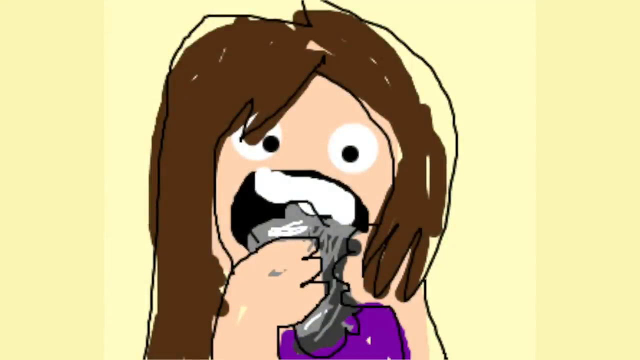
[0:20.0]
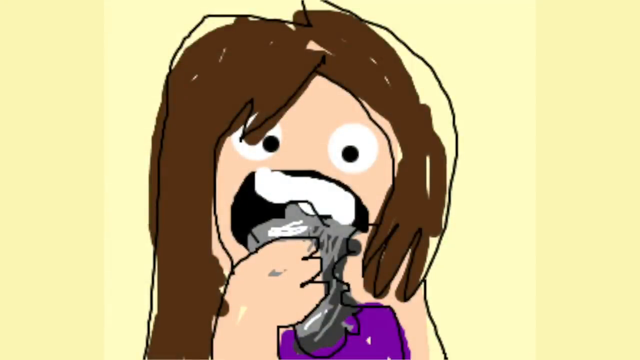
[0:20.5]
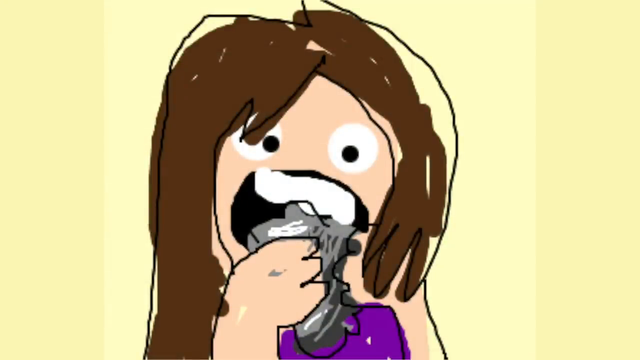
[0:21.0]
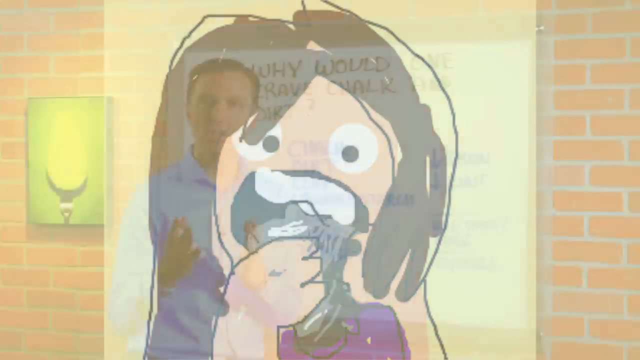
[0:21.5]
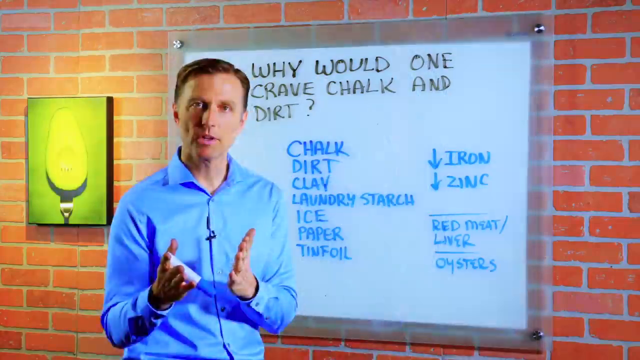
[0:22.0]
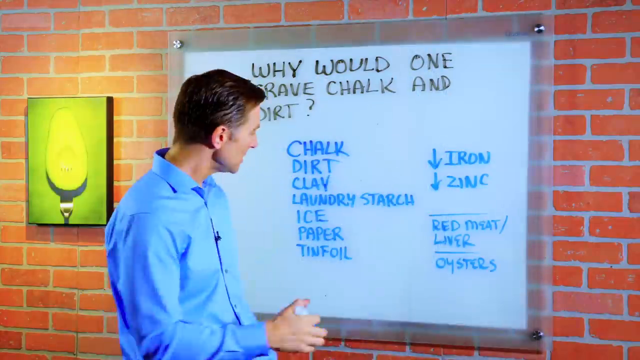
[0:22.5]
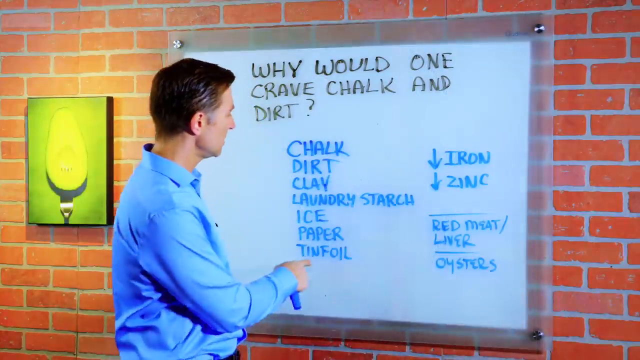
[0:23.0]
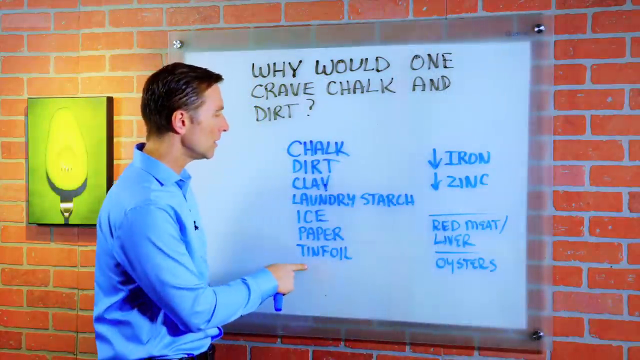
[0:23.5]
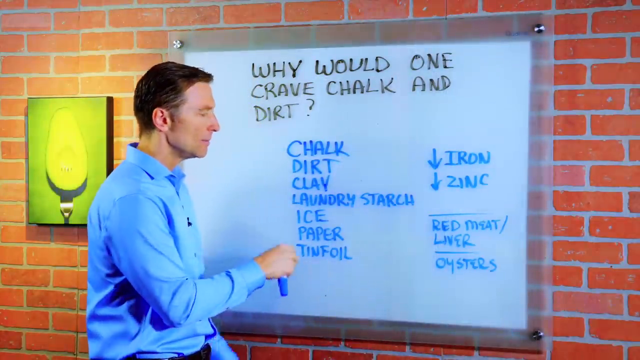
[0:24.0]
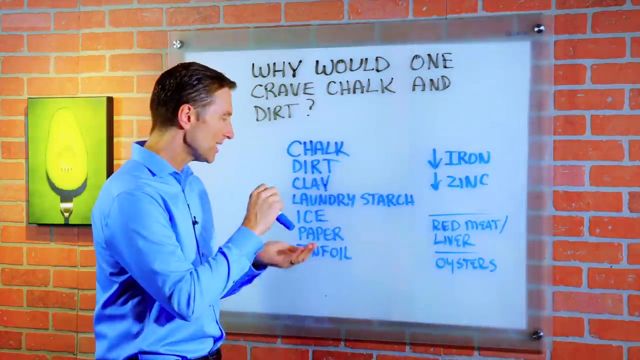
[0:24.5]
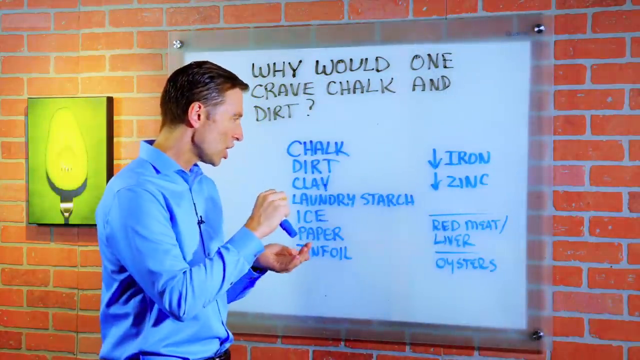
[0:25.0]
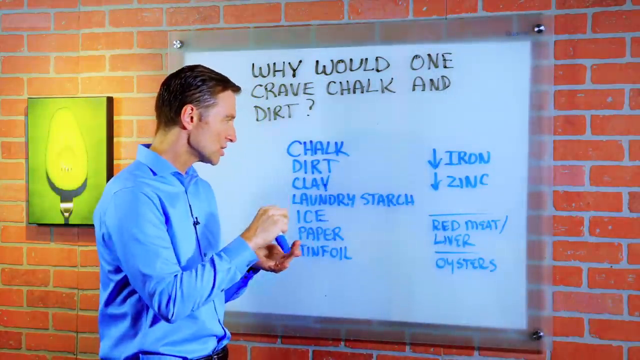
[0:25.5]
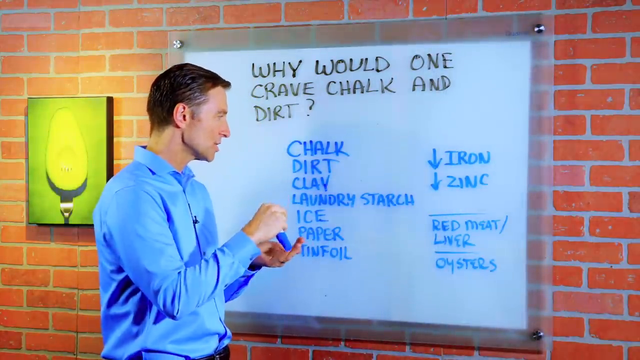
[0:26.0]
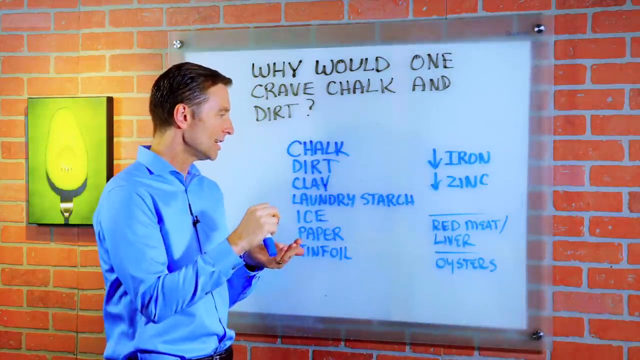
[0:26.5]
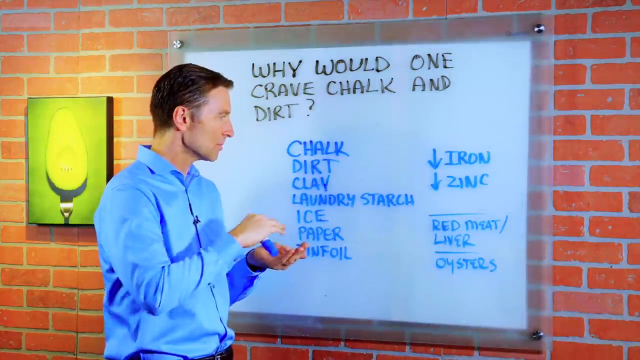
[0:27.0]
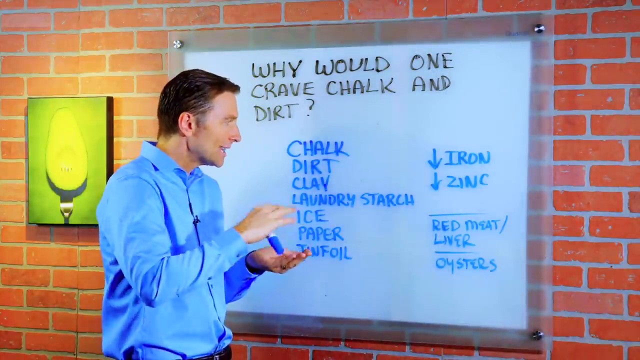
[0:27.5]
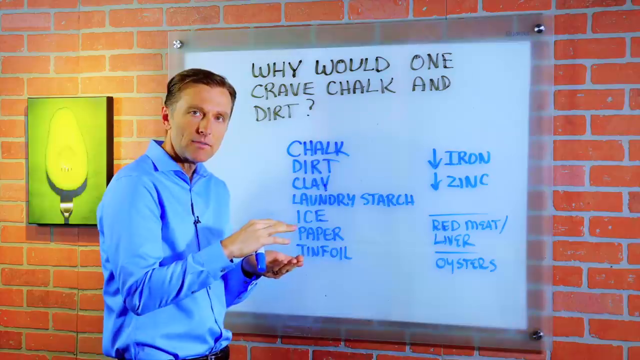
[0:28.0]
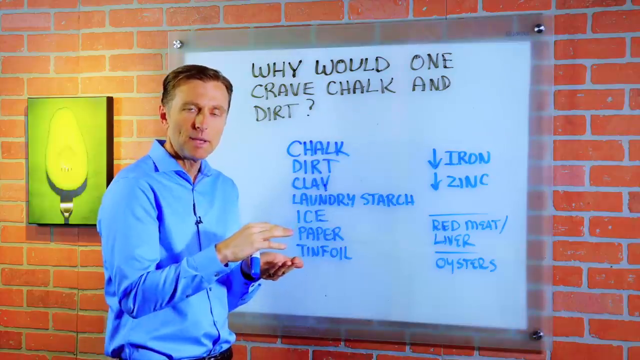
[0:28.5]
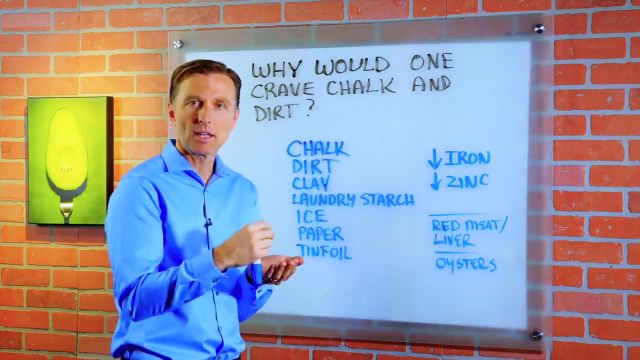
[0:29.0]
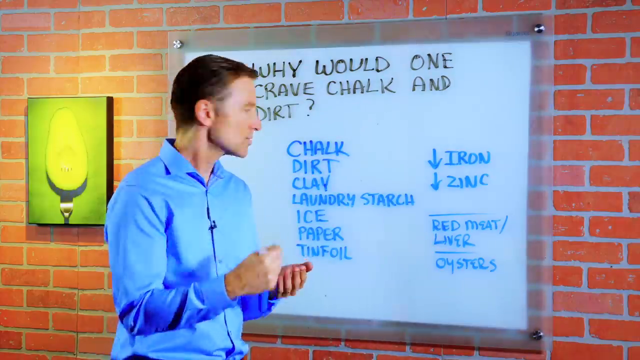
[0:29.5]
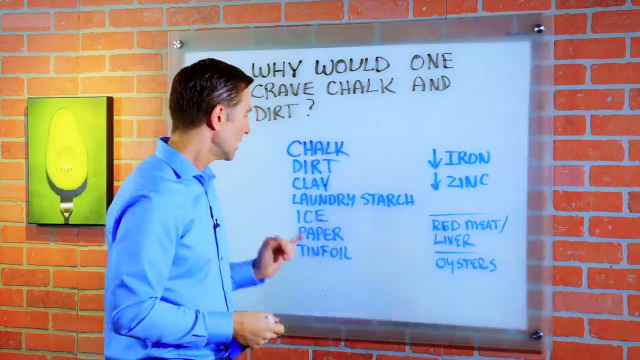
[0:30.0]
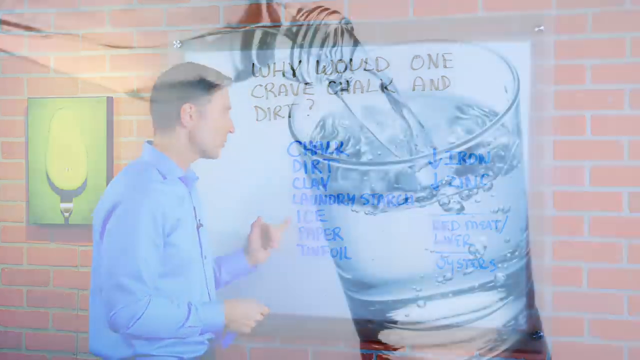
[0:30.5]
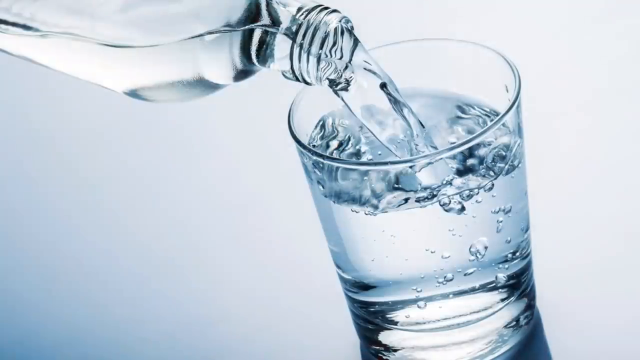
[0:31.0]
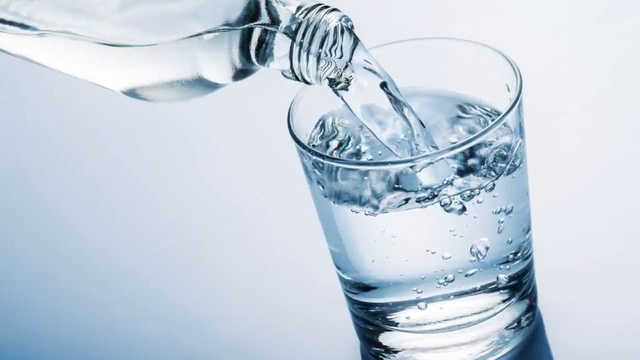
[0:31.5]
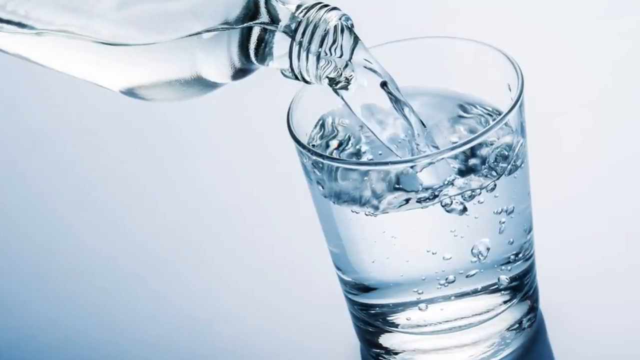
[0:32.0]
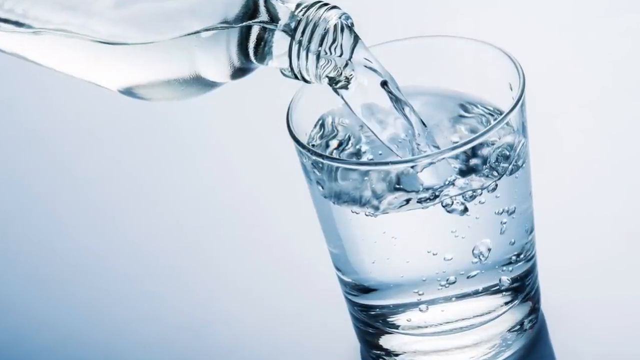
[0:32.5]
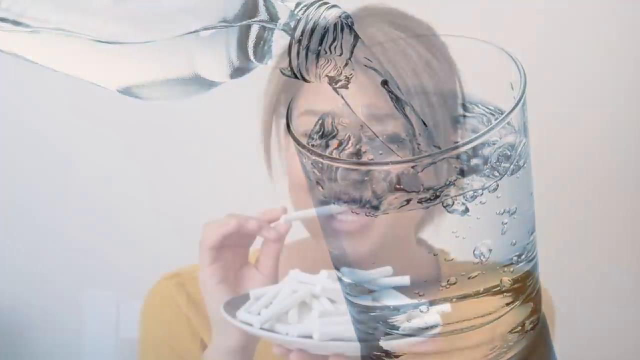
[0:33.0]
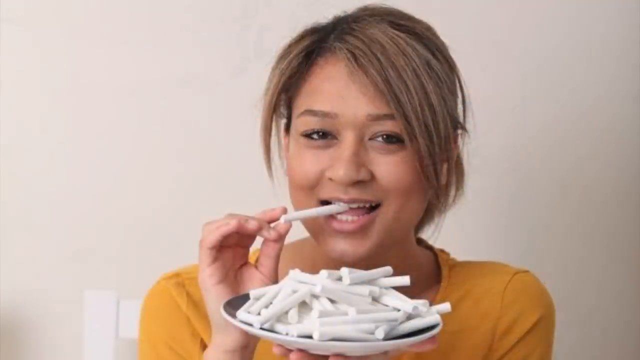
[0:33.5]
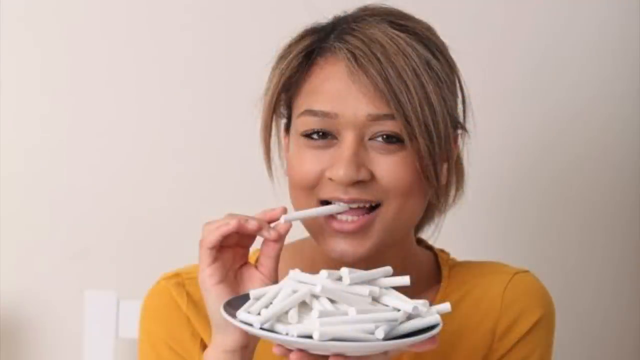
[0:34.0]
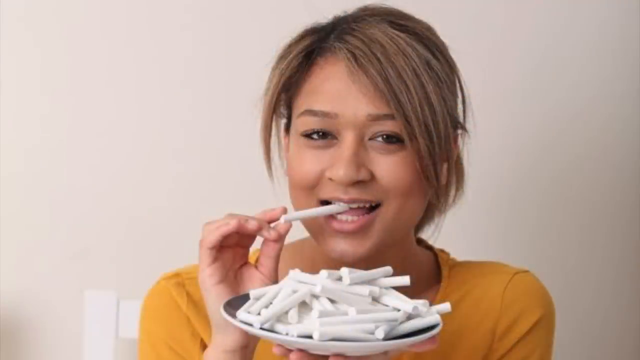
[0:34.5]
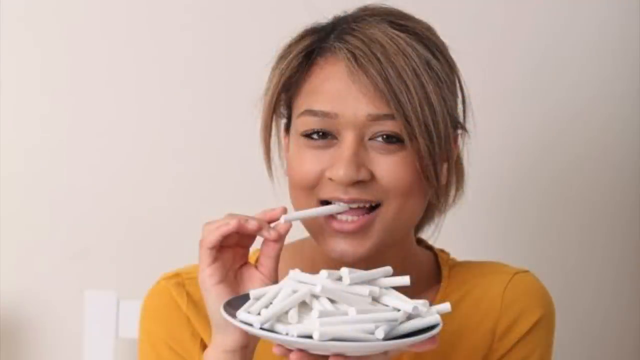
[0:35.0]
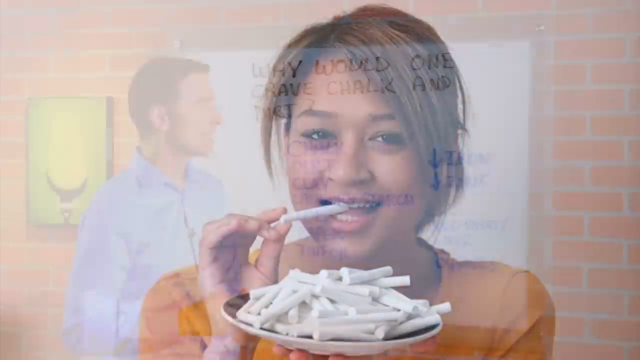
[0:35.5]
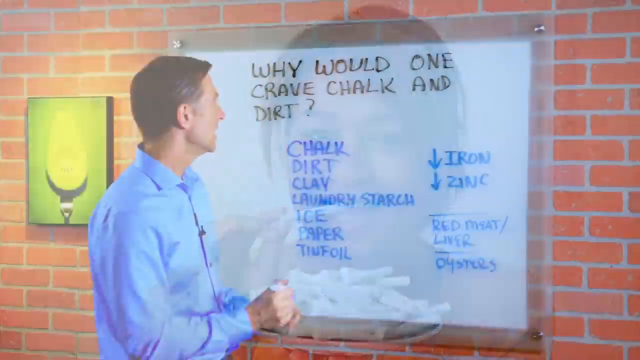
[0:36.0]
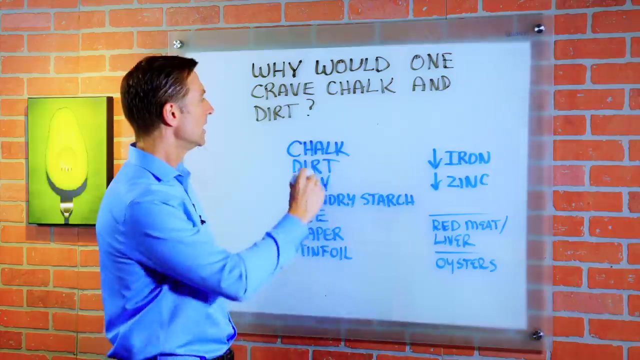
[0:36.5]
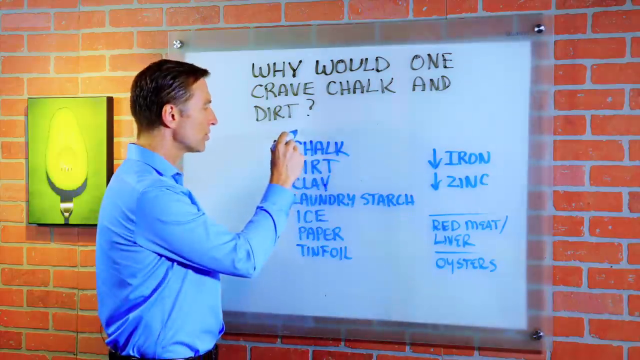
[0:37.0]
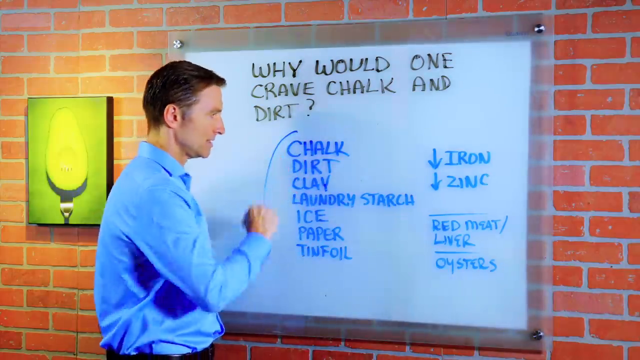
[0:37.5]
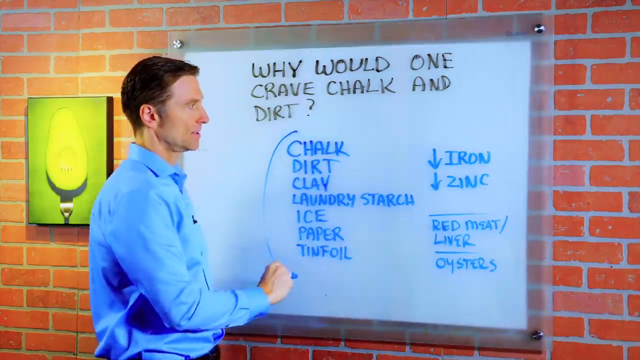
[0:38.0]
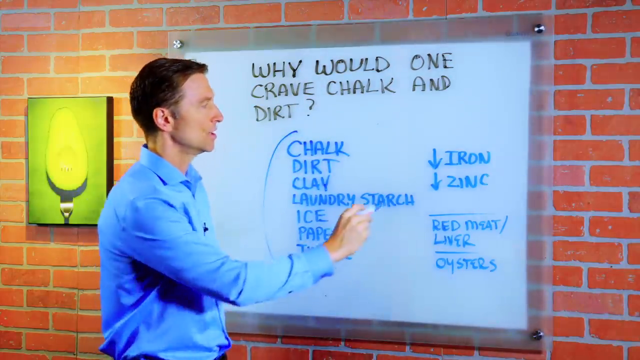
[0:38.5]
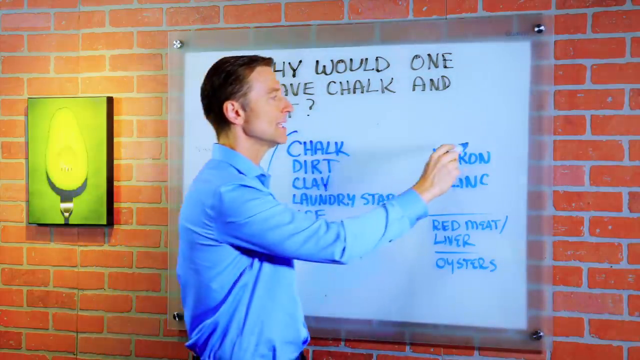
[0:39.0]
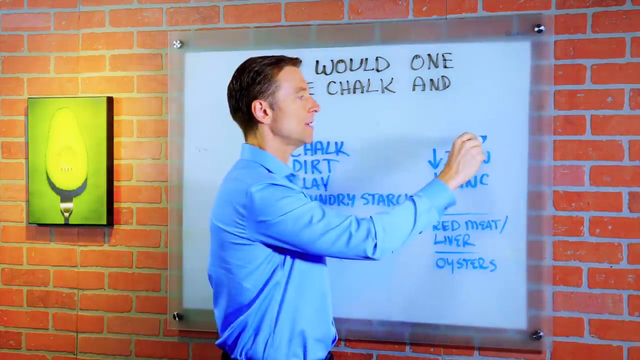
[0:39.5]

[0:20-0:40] The video starts with a cartoonish drawing of a person with brown hair who appears to be eating something. It then shows a man in a blue collared shirt standing in front of a brick wall, with a whiteboard behind him that says "Why would one crave chalk and dirt", with some things written in blue directly below. The man uses his hands to show what he is speaking about as he goes over different areas on the whiteboard. Next comes an image of what looks to be a clear bottle pouring water into a clear glass, and then an image of a woman with brown hair pops onto the screen; she appears to be eating white chalk. The video goes back to the man in front of the whiteboard, who seems to be going over certain parts of the whiteboard again.